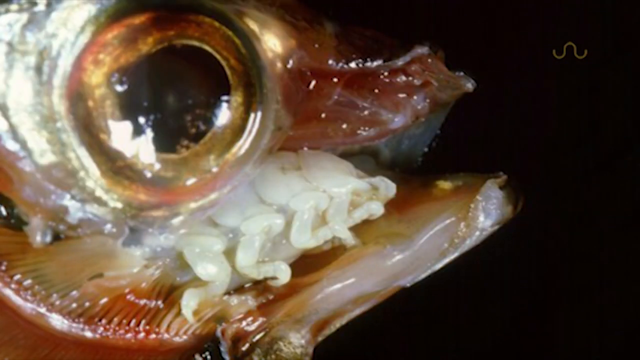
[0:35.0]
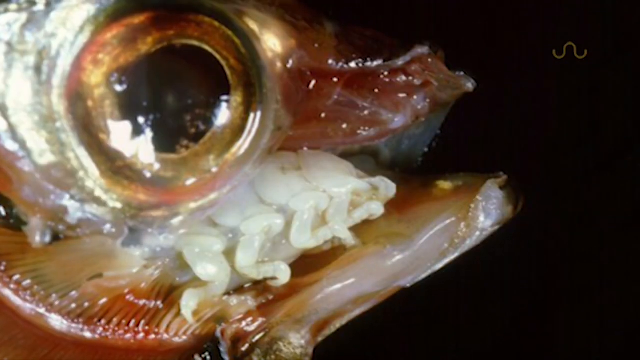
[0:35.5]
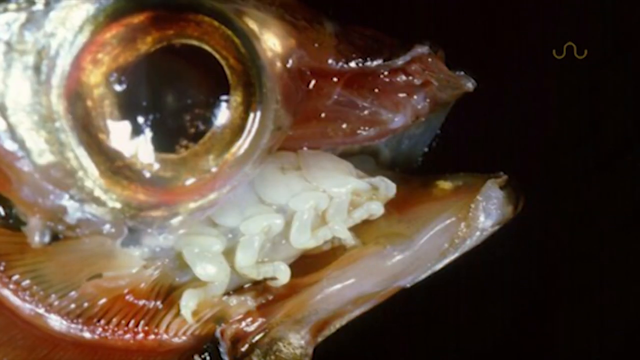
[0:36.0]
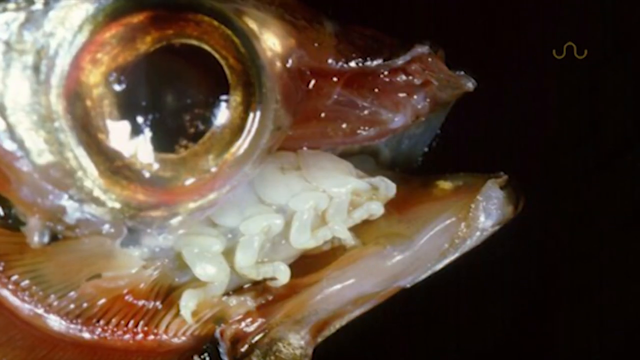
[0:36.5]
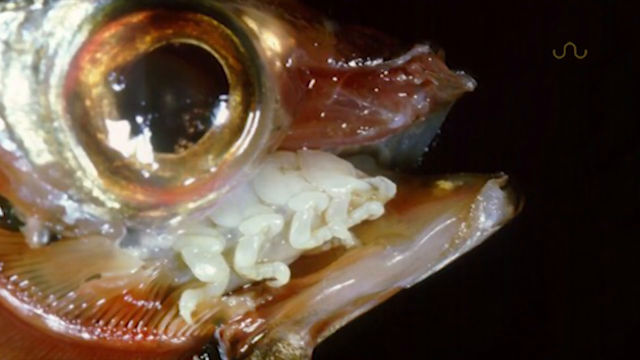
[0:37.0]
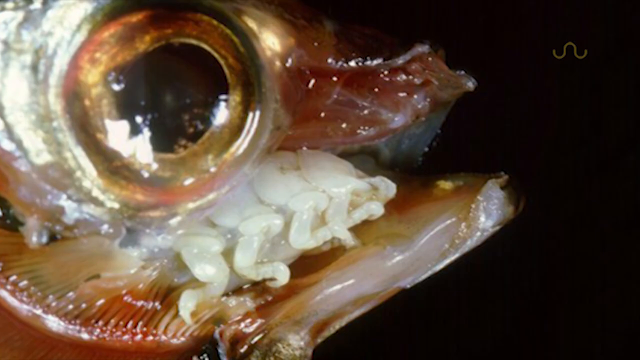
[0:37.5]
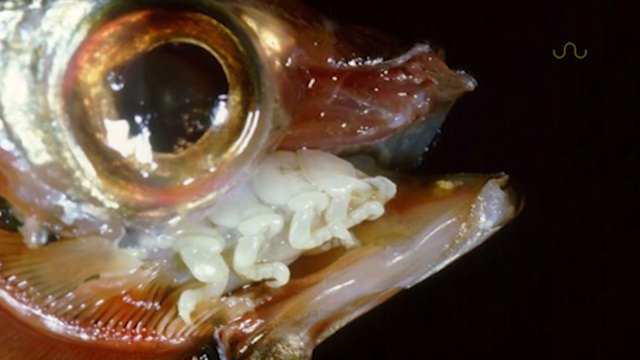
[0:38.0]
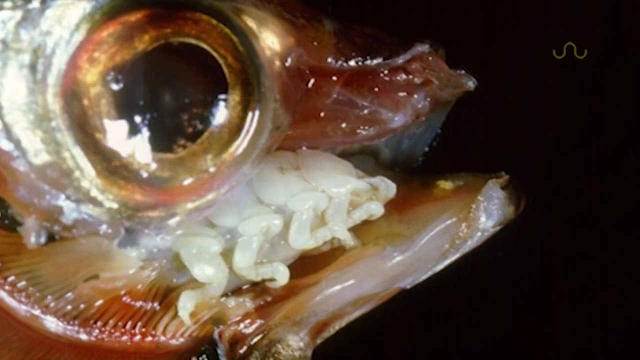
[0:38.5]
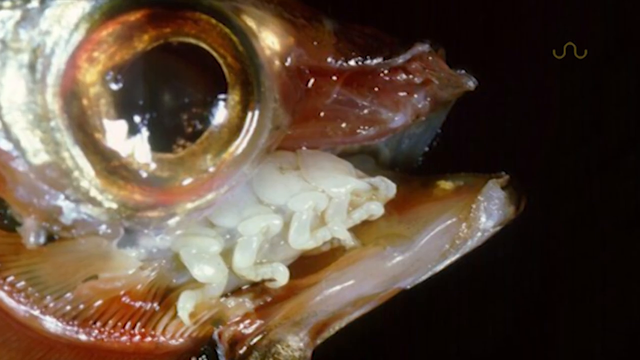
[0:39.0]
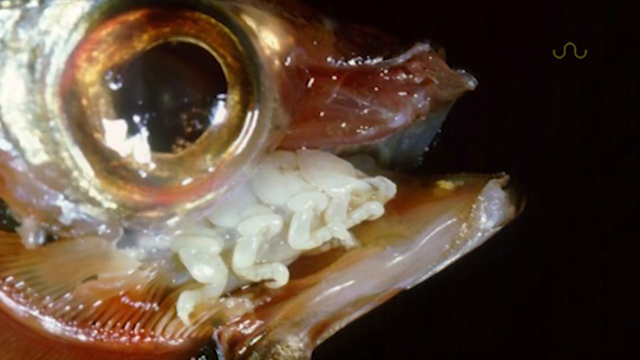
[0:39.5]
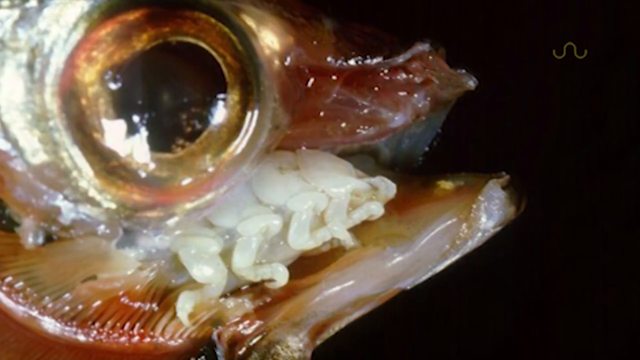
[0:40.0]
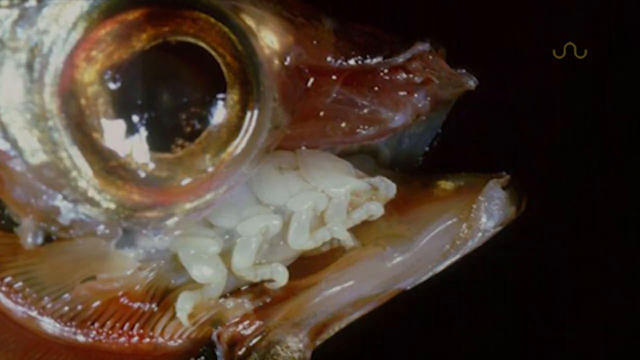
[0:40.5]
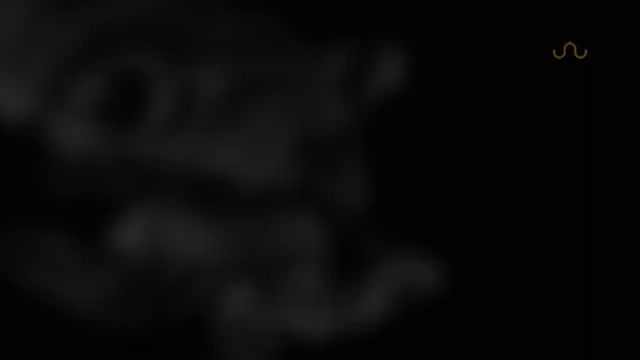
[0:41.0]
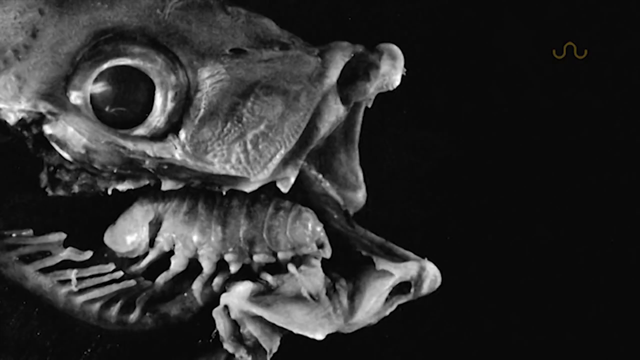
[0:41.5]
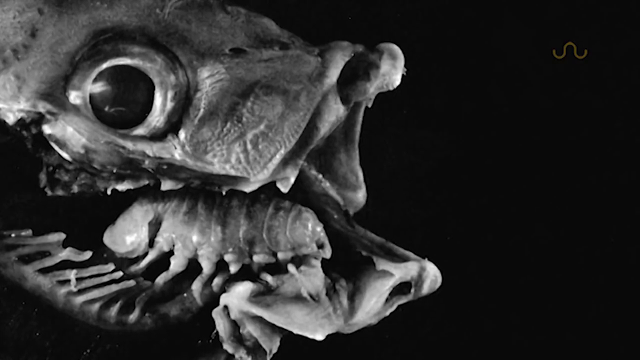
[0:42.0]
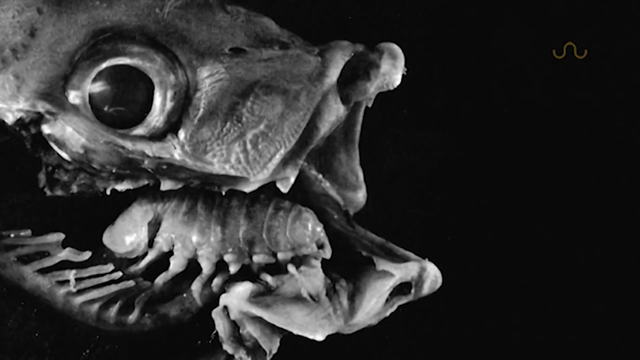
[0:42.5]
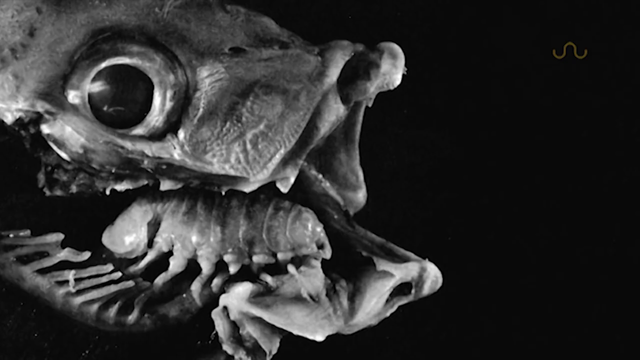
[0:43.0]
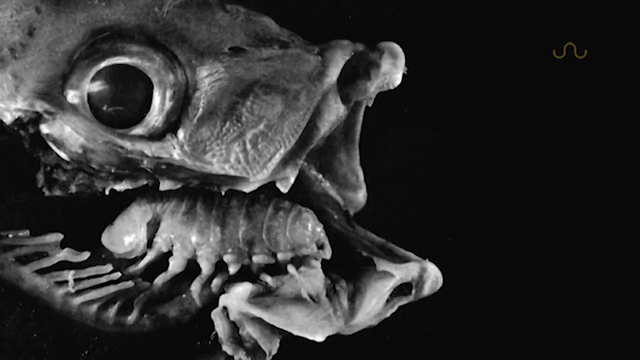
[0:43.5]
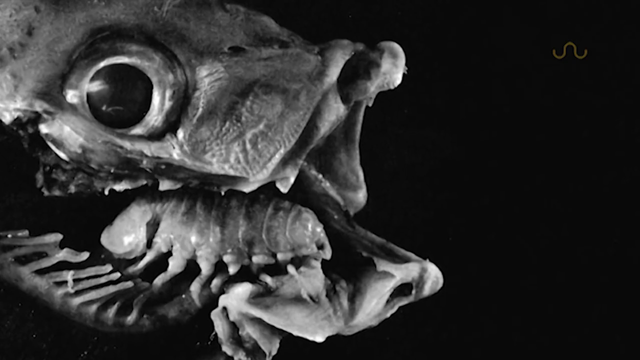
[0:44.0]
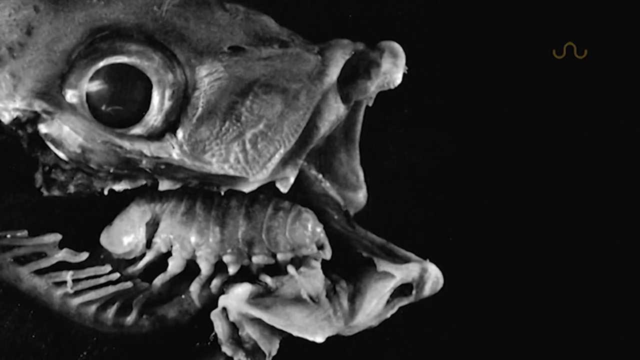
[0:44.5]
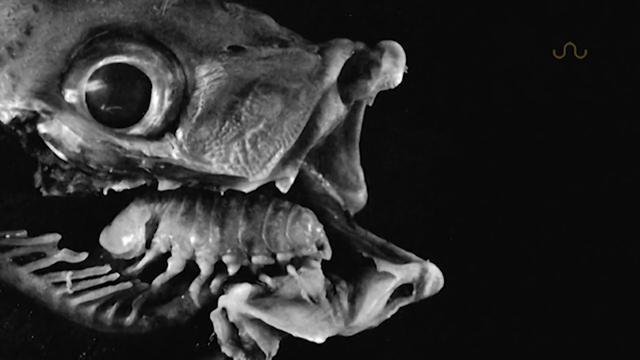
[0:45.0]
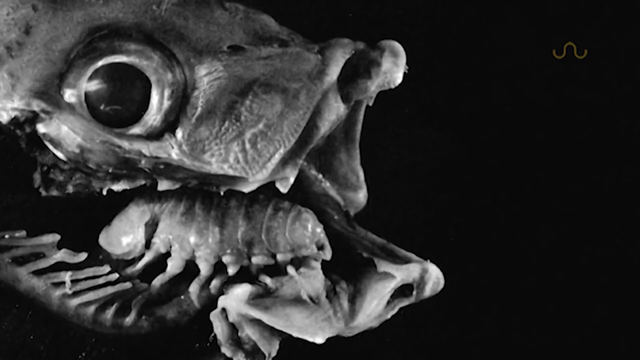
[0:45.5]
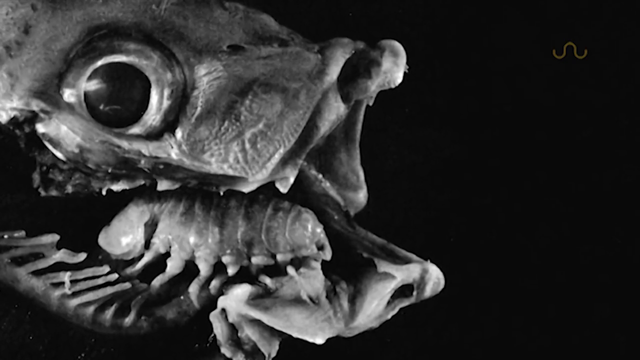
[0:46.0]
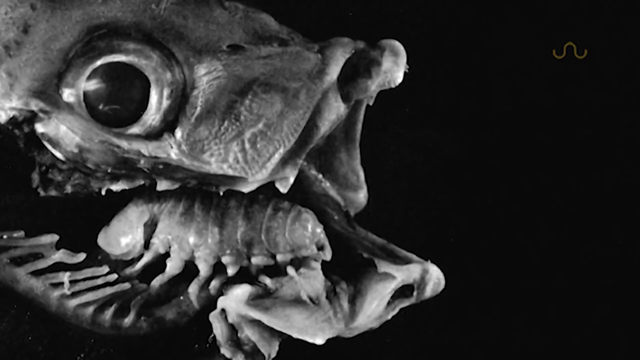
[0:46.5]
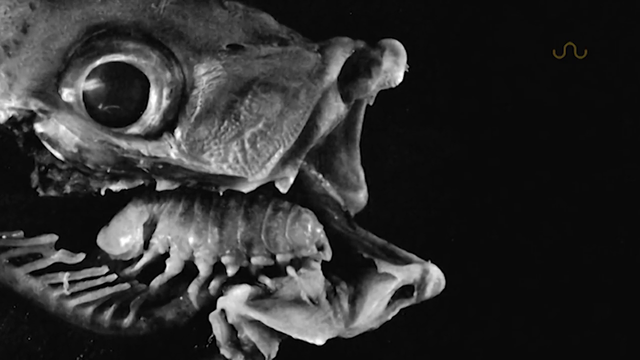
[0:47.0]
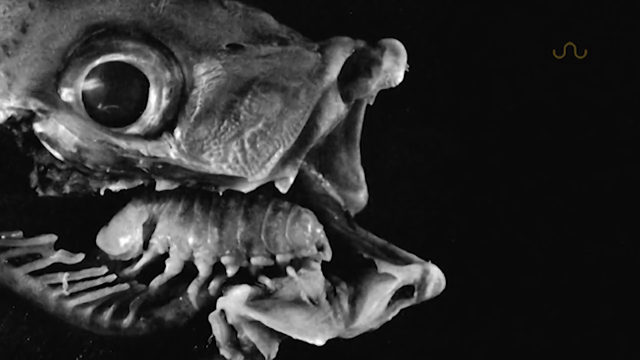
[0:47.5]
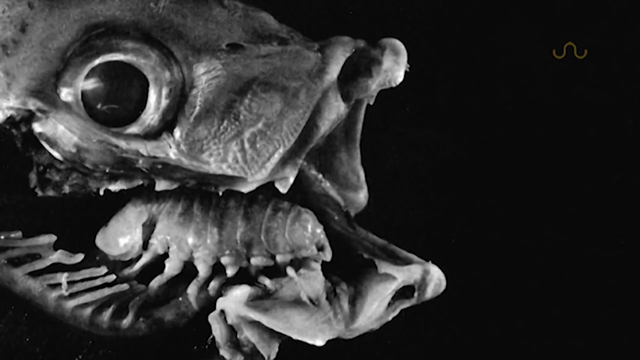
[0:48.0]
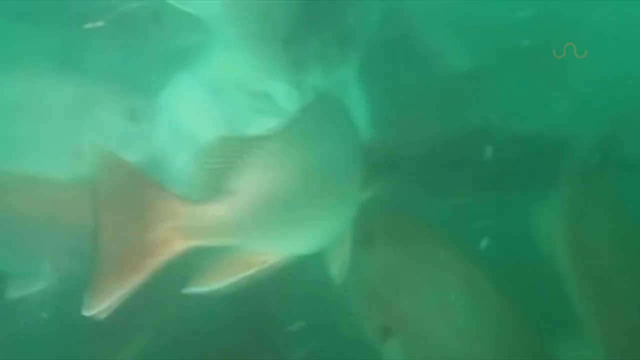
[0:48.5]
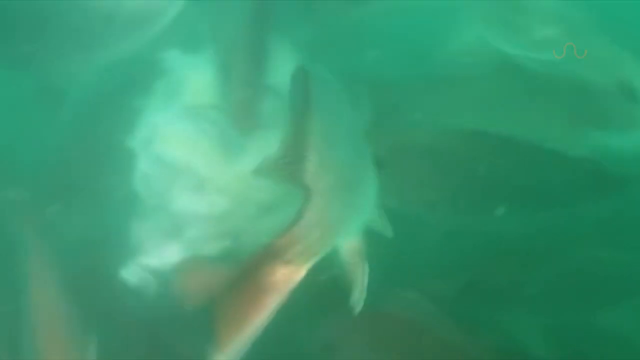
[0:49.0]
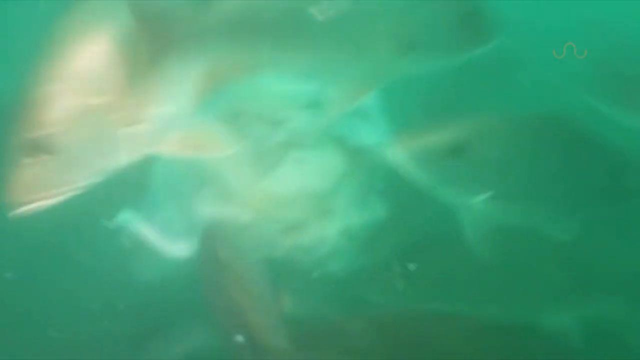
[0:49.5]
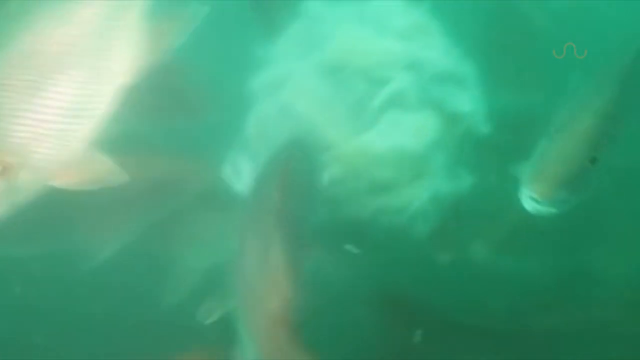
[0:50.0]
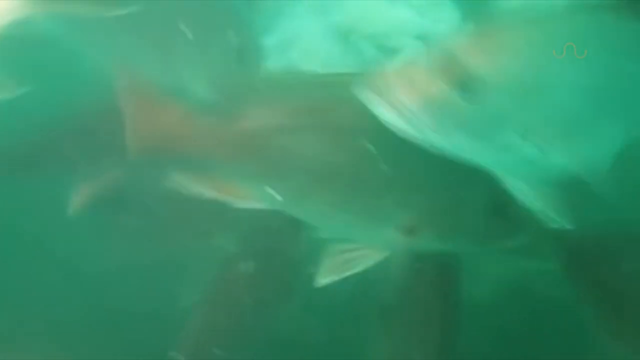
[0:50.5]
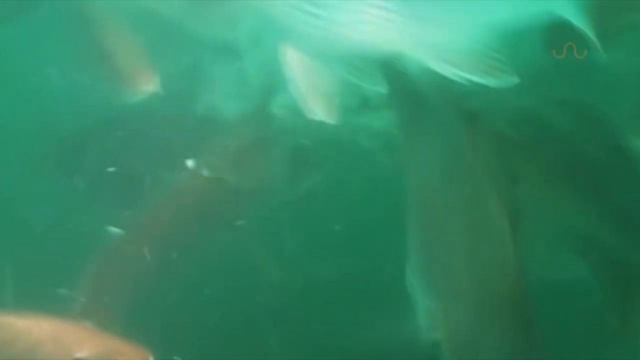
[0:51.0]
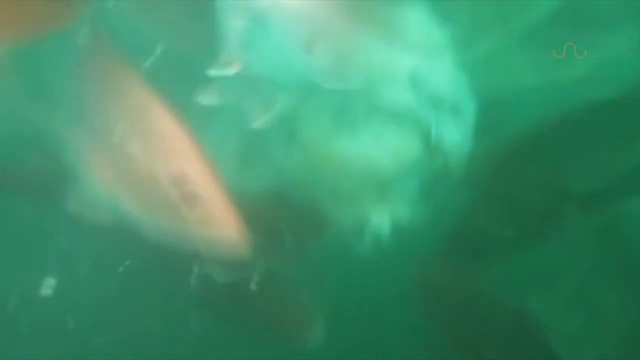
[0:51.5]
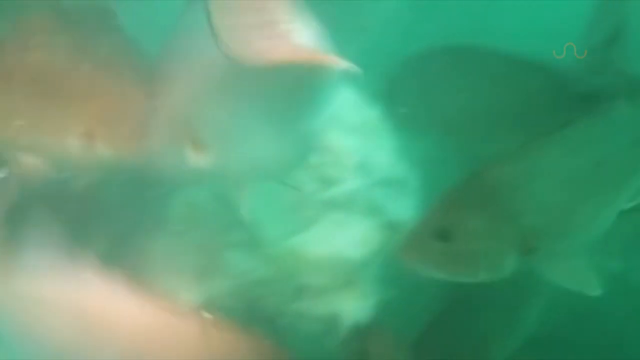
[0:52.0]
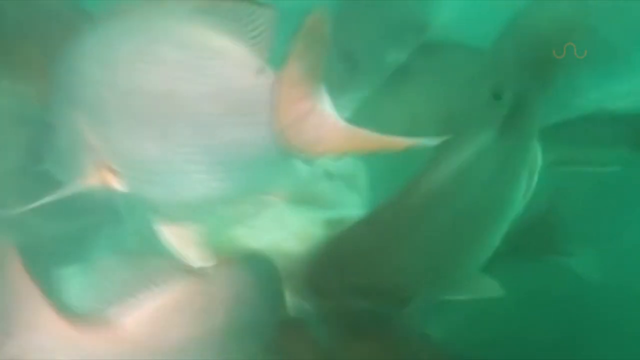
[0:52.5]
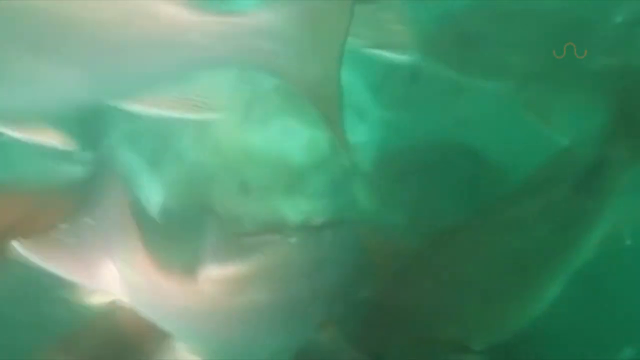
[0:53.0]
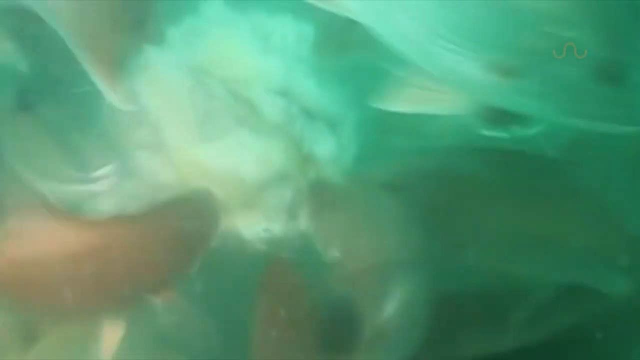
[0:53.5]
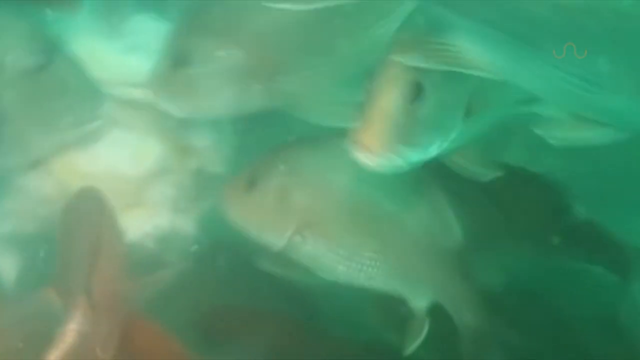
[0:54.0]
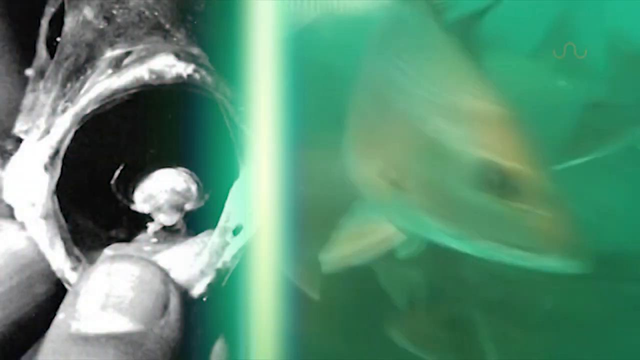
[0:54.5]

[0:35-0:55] A fish has a mite or louse inside it; the fish seems to be missing the sides of its face, and the fish's eye is visible. A bunch of fish underwater seem to be eating something. The view returns to the fish, where the louse-like creature is tucked inside the fish's face where the tongue would be. The bunch of fish eat something underwater that looks like their food, possibly where they got the louse.